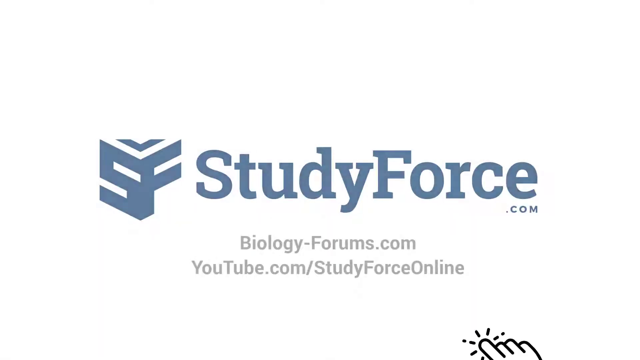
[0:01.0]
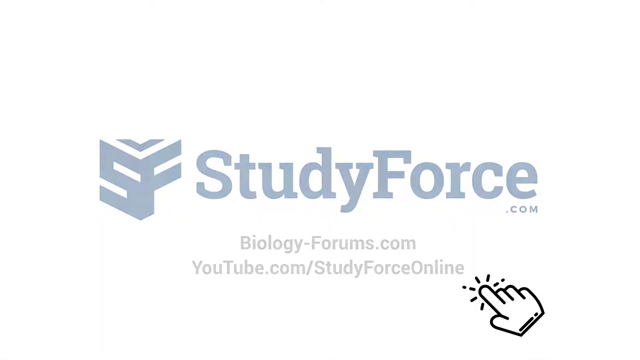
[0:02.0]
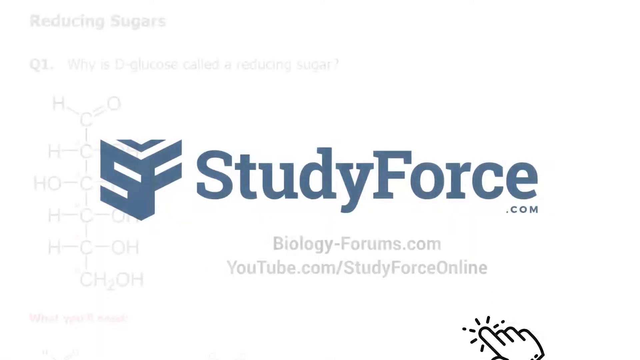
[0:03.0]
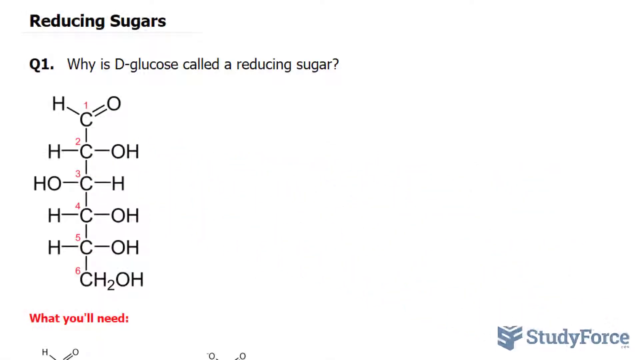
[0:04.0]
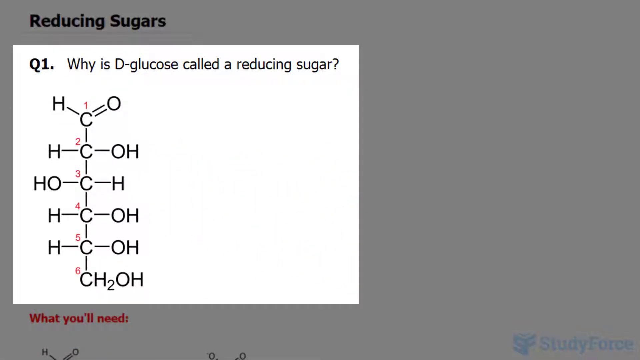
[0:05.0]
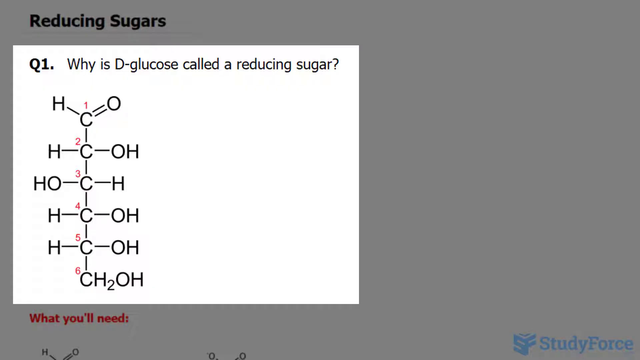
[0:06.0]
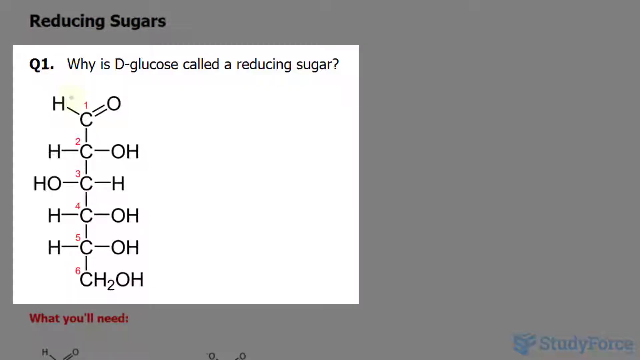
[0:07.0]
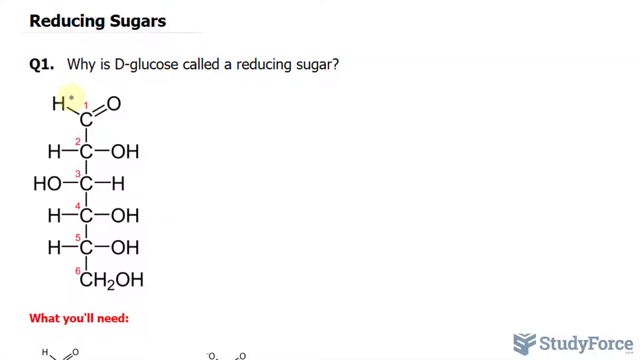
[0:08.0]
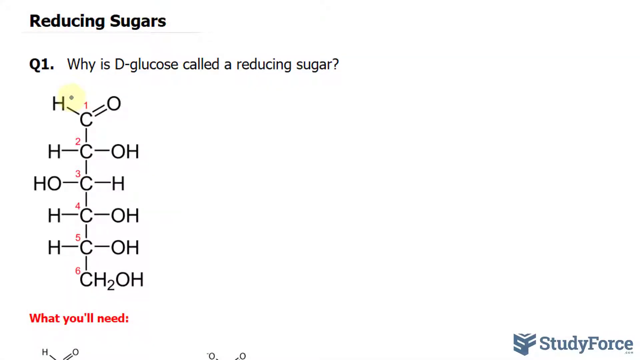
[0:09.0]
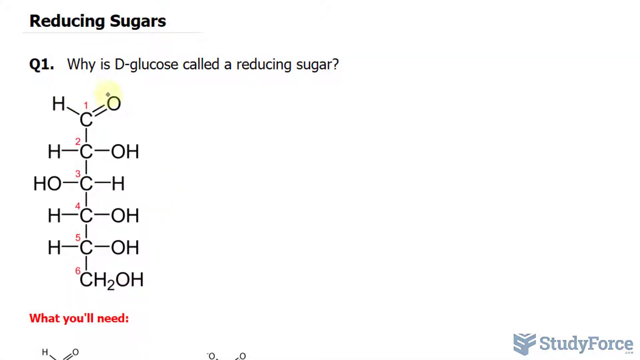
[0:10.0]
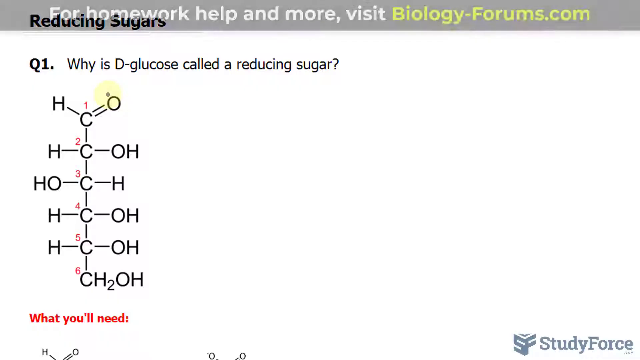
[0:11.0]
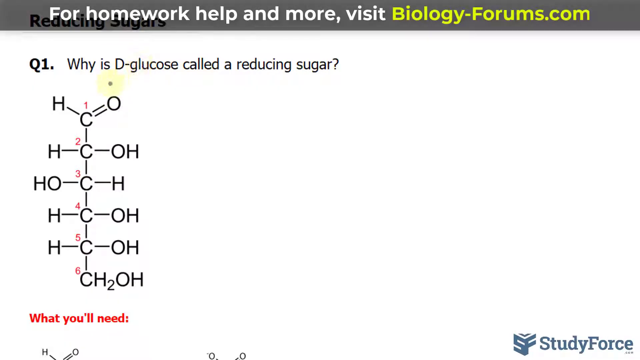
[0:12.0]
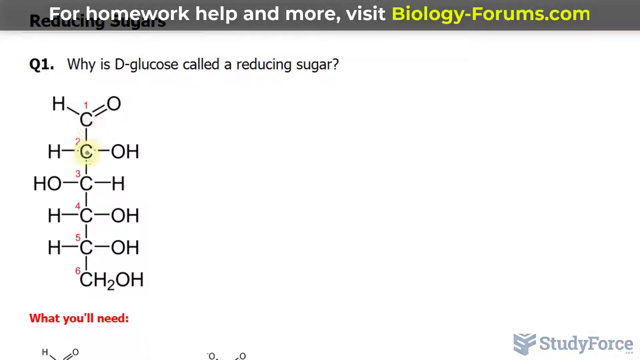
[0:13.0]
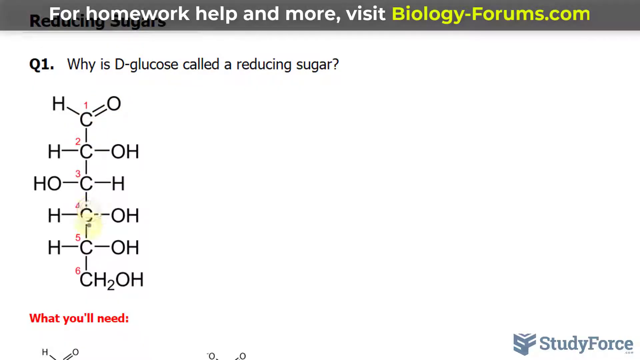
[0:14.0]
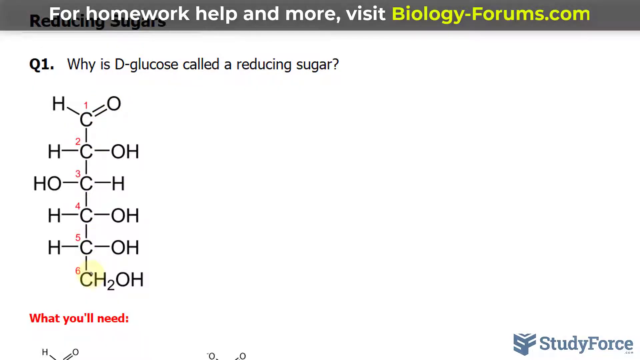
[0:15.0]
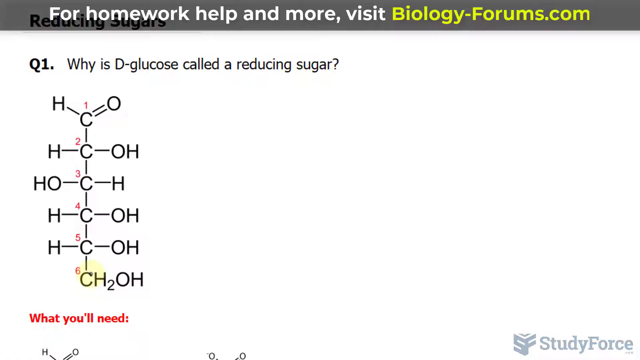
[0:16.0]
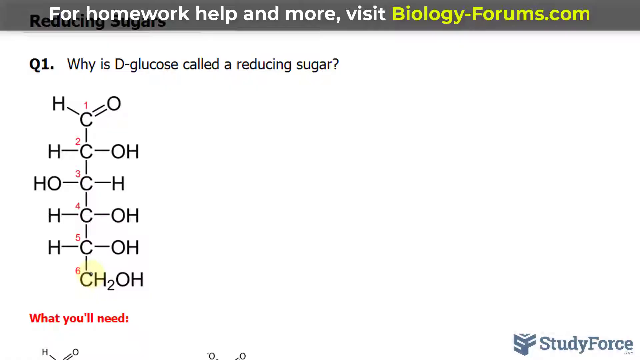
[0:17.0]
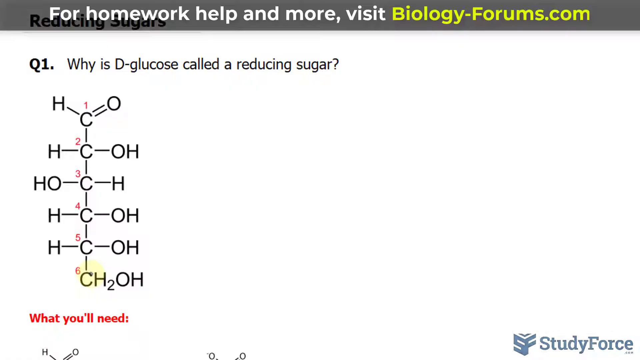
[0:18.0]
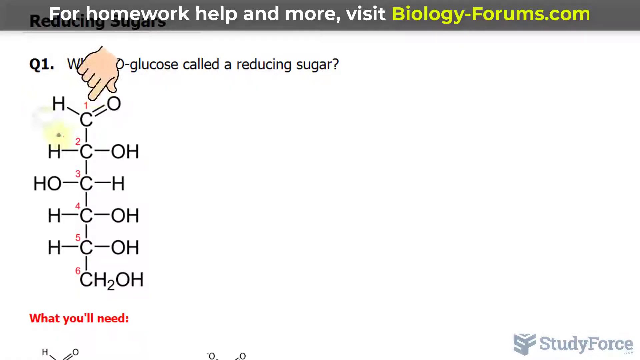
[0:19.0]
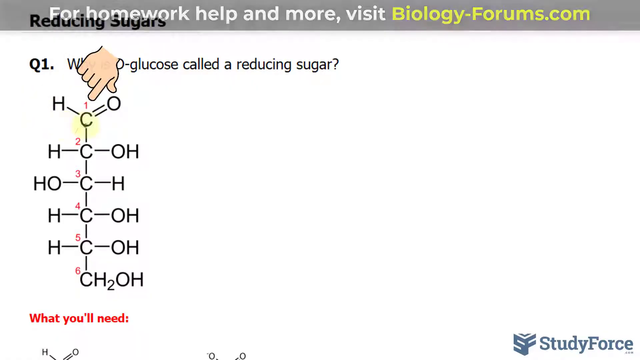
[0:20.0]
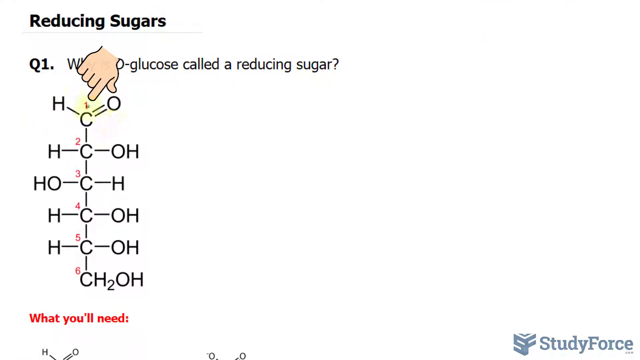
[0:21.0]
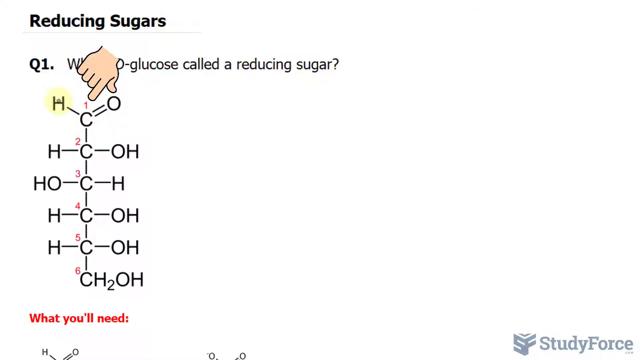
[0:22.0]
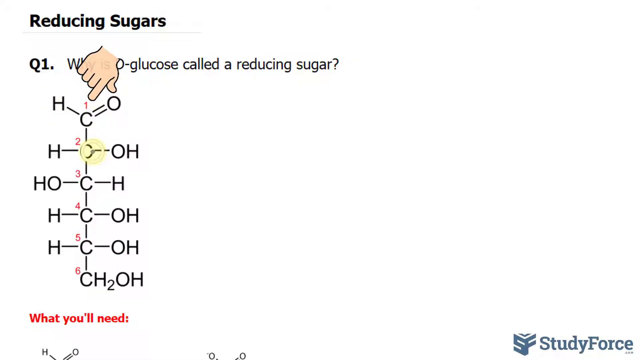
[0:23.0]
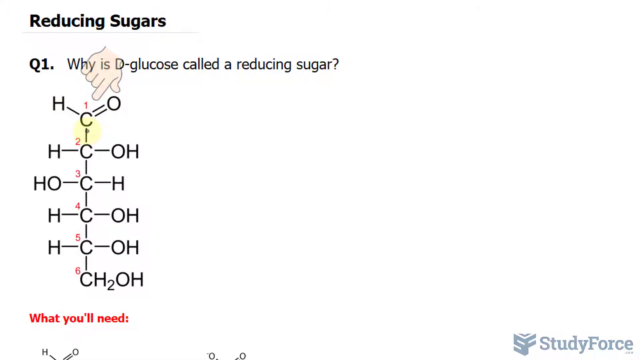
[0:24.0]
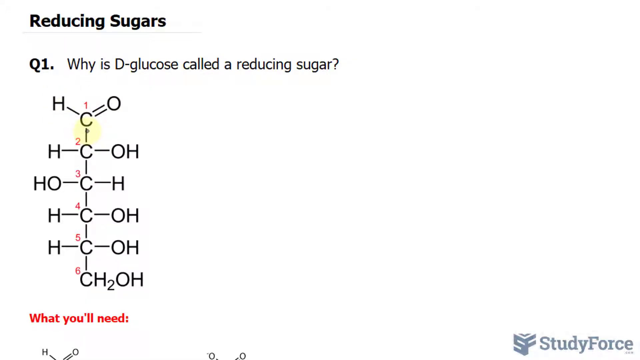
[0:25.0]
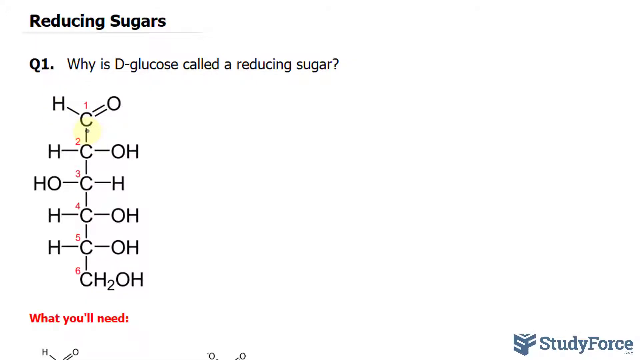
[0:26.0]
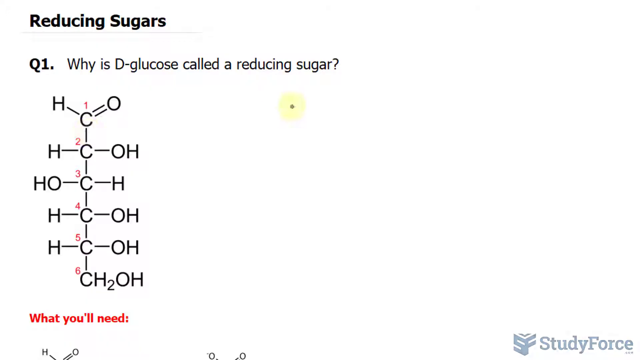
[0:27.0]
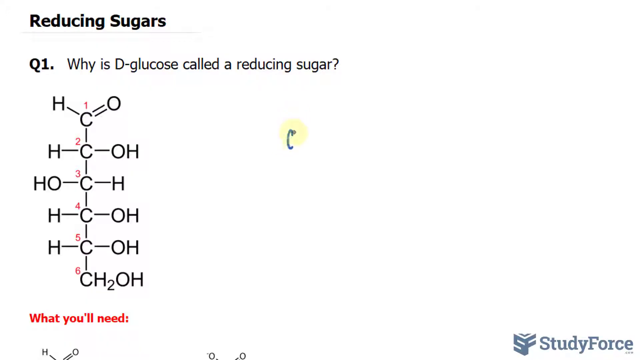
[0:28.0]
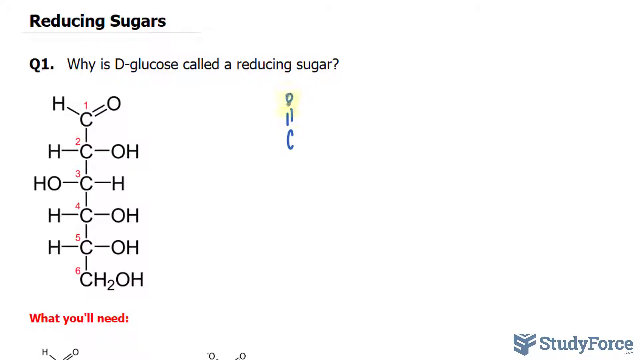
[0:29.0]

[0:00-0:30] The video opens with text reading "studyforce.com biologyforums.com youtube.com studyforce online" and a large mouse on the screen. What looks like a question appears, with the heading "reducing sugars" above it. It is labeled "question 1" and reads "Why is D-glucose called a reducing sugar?" Below it are chemical bonding formulas. A yellow pointer on the screen highlights the formula, marking all the C's in it. Underneath is a "what you will need" section, and at the top is the text "for homework help and more visit biologyforums.com". A hand points to the C's in the chemical equation, and the pointer begins writing in blue on the screen. The page has a white background, with studyforce.com in the bottom right corner.